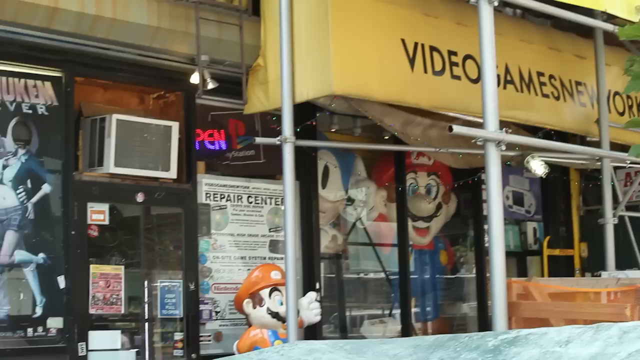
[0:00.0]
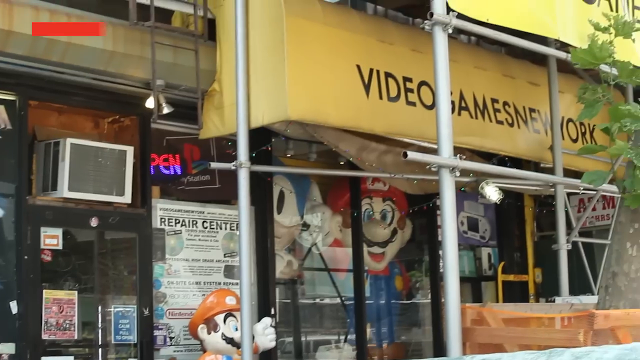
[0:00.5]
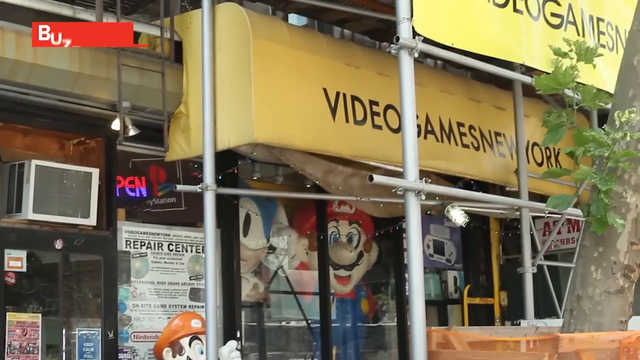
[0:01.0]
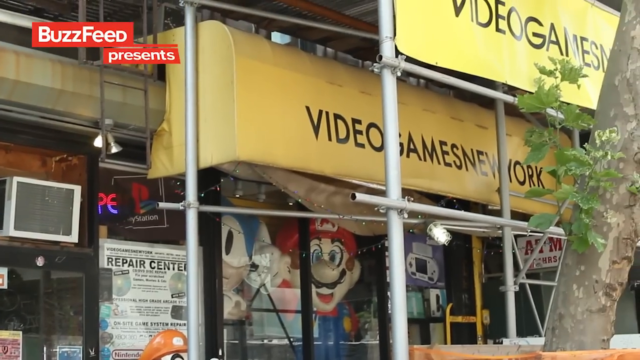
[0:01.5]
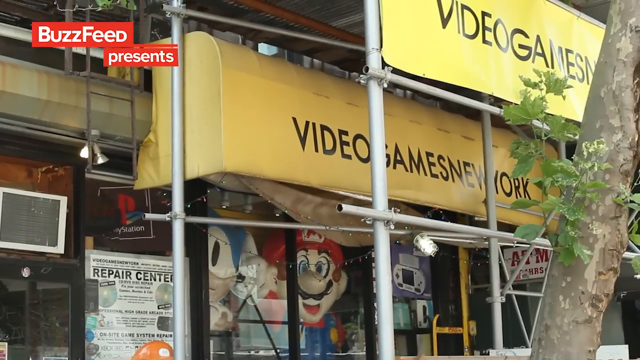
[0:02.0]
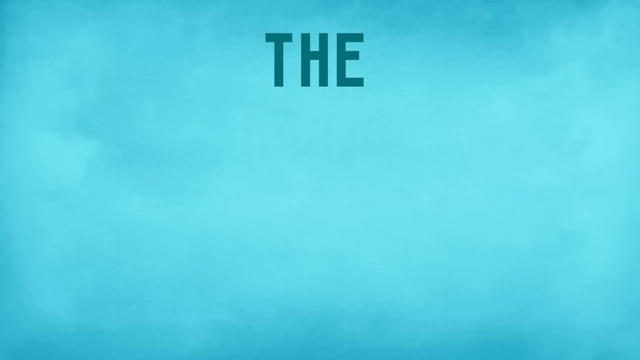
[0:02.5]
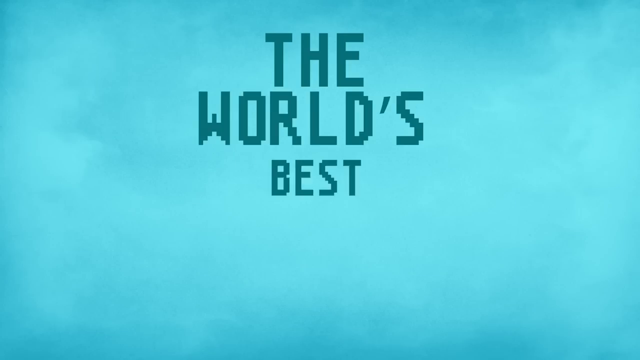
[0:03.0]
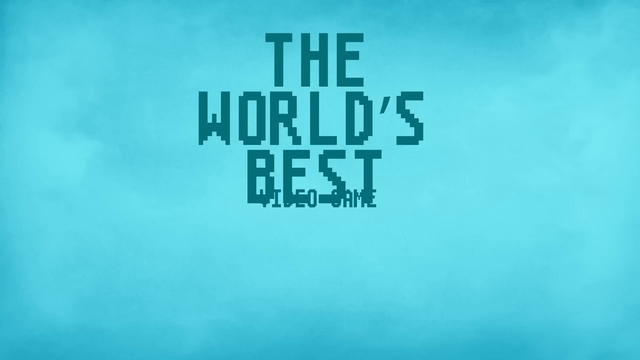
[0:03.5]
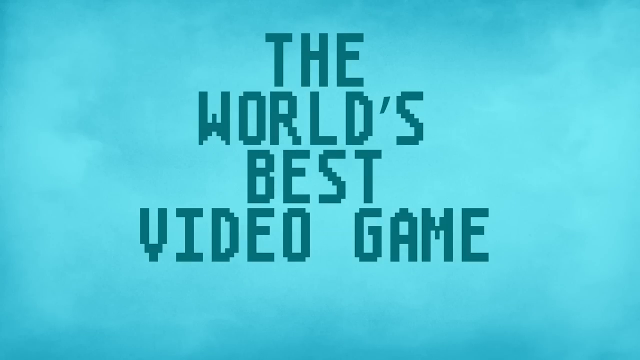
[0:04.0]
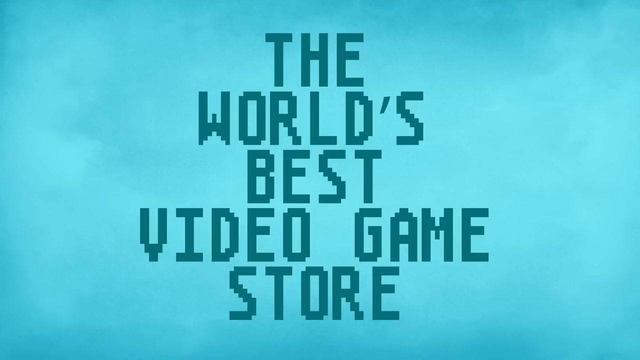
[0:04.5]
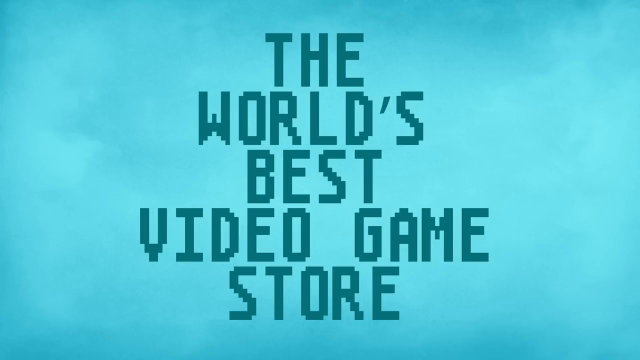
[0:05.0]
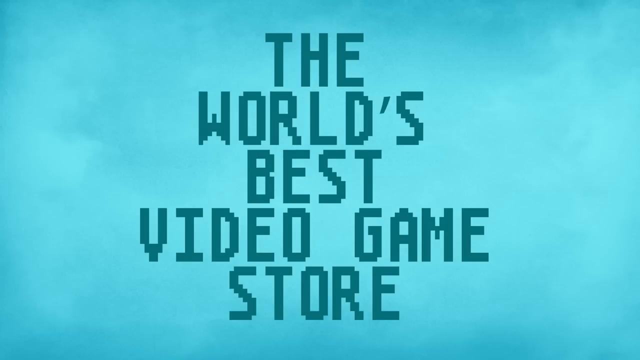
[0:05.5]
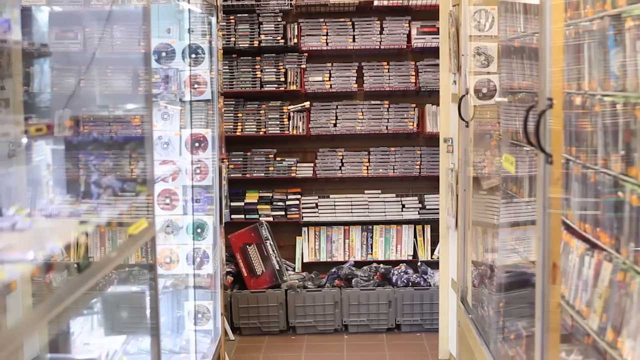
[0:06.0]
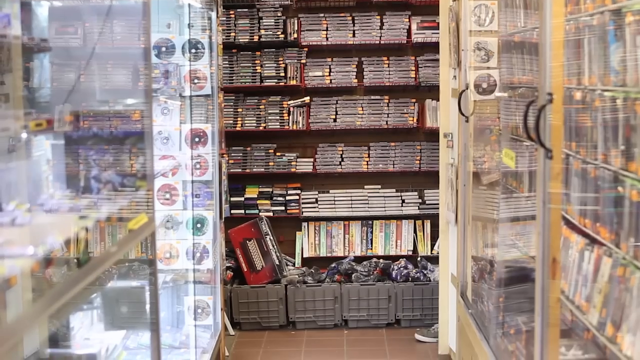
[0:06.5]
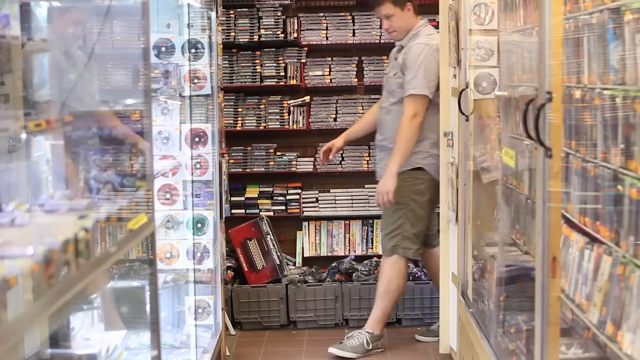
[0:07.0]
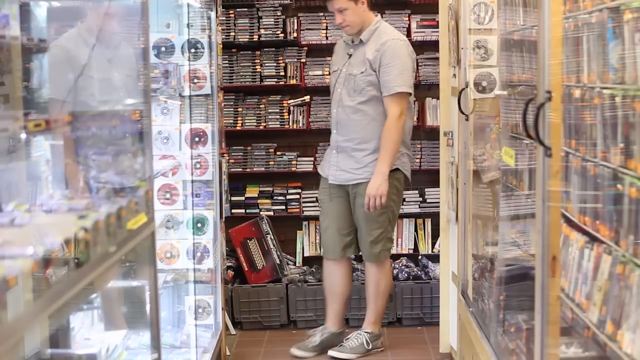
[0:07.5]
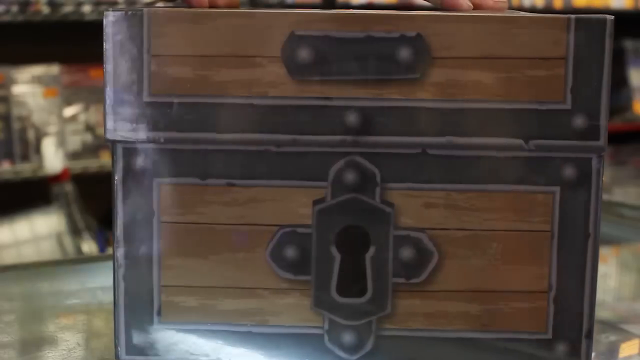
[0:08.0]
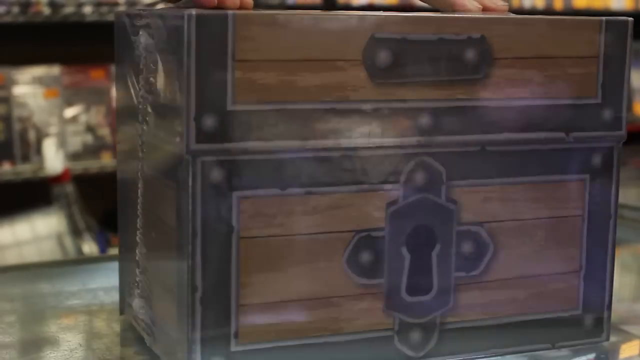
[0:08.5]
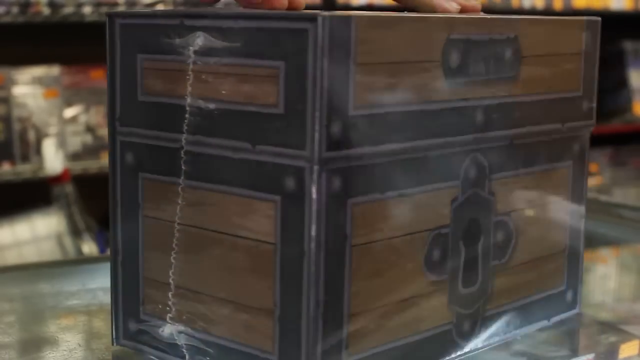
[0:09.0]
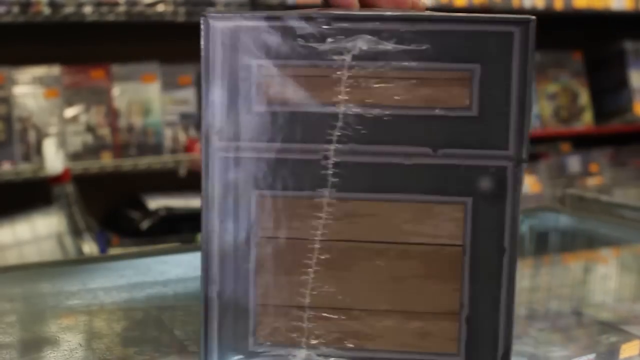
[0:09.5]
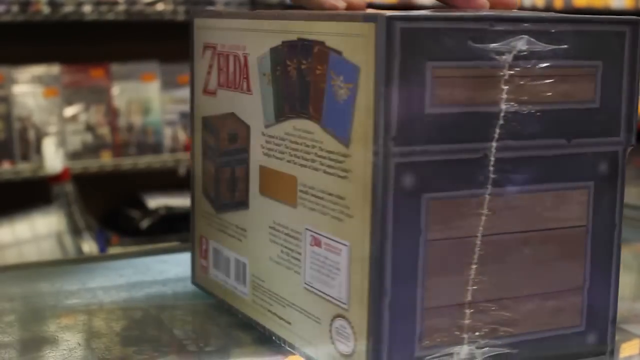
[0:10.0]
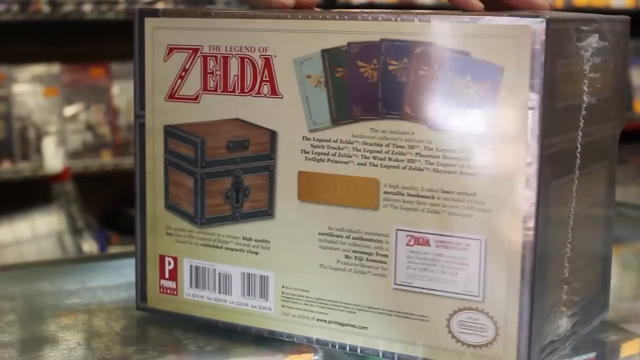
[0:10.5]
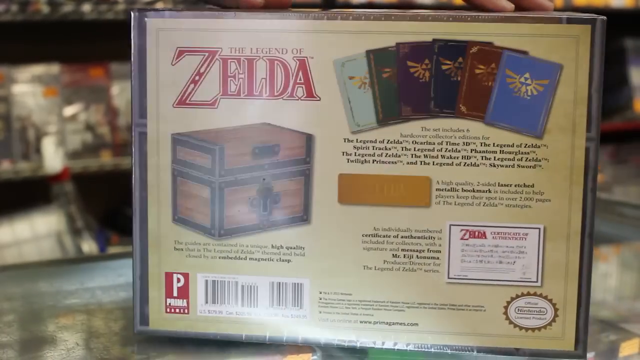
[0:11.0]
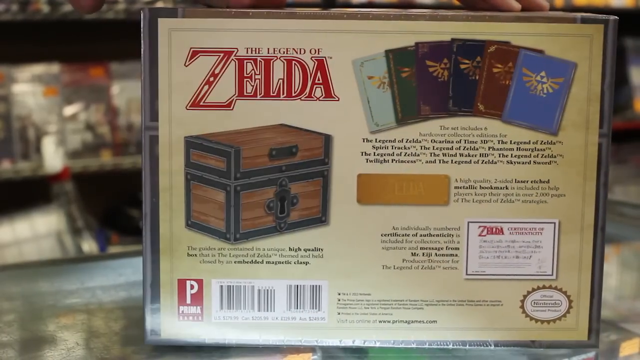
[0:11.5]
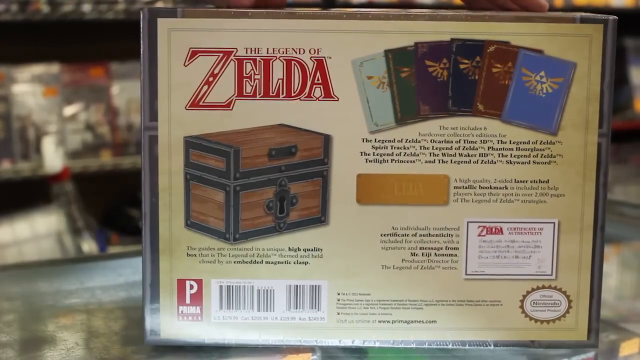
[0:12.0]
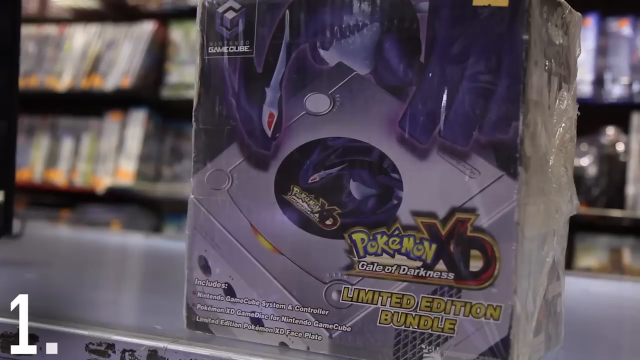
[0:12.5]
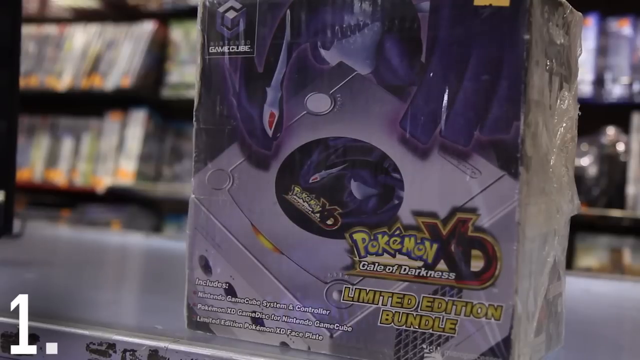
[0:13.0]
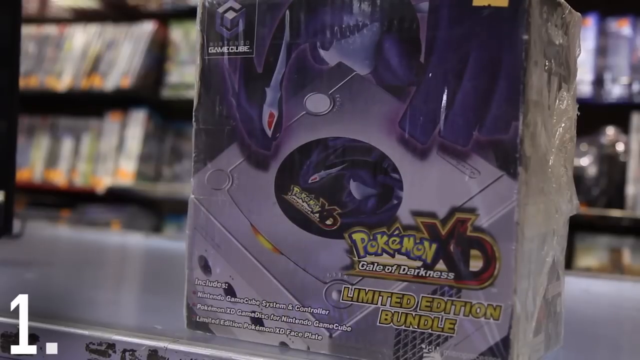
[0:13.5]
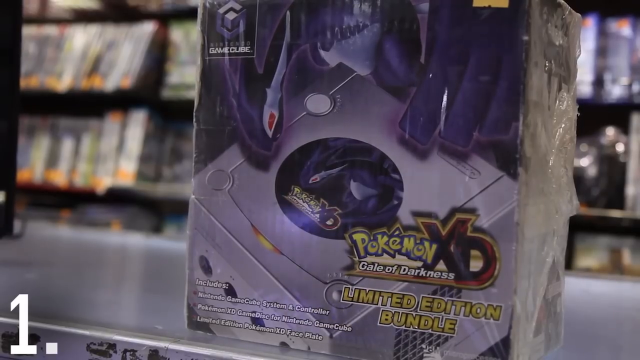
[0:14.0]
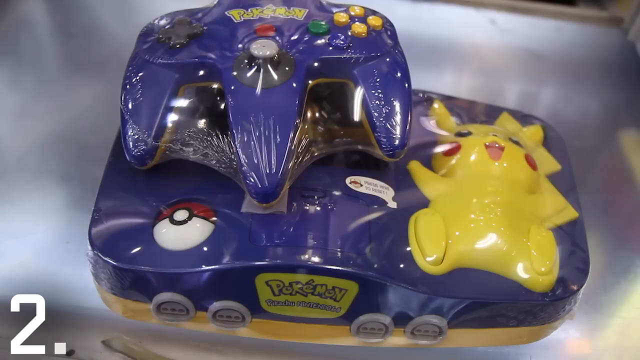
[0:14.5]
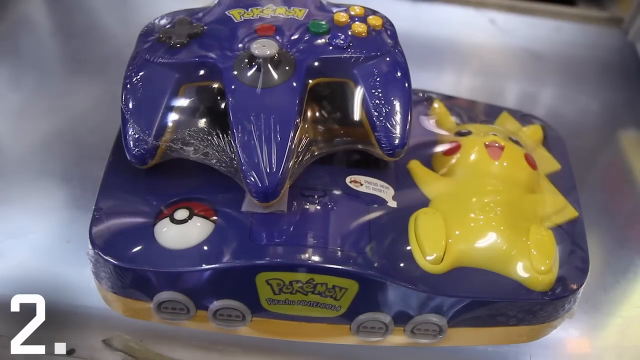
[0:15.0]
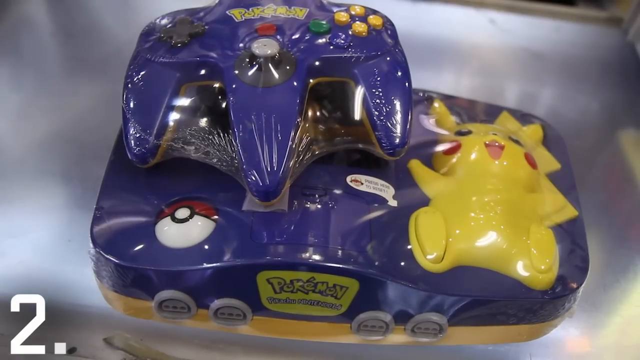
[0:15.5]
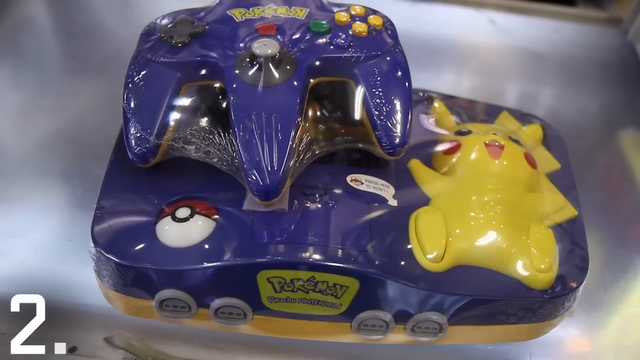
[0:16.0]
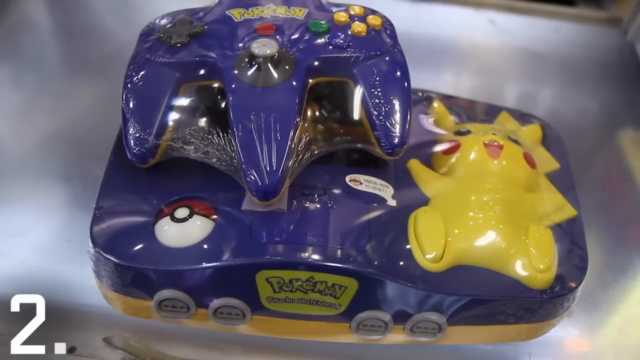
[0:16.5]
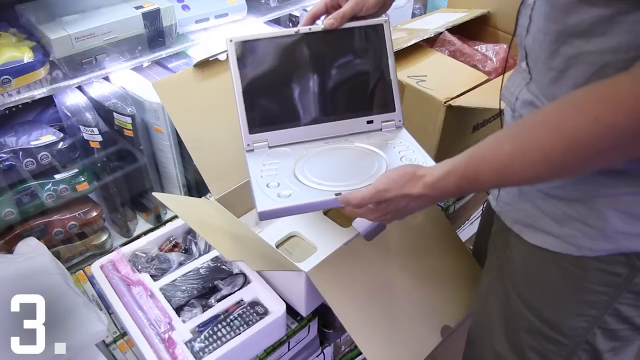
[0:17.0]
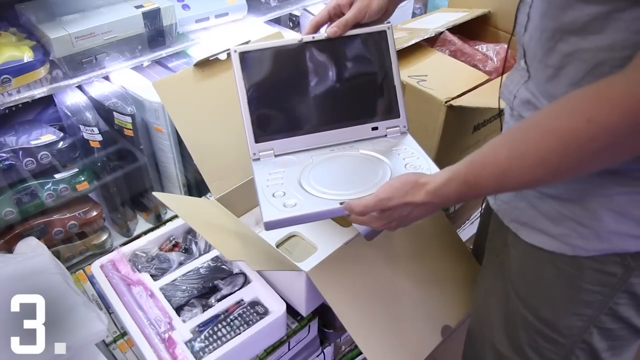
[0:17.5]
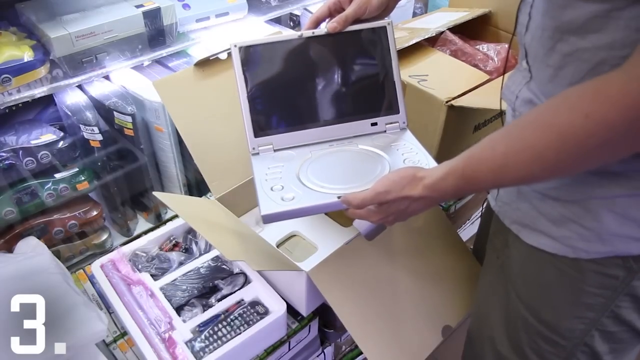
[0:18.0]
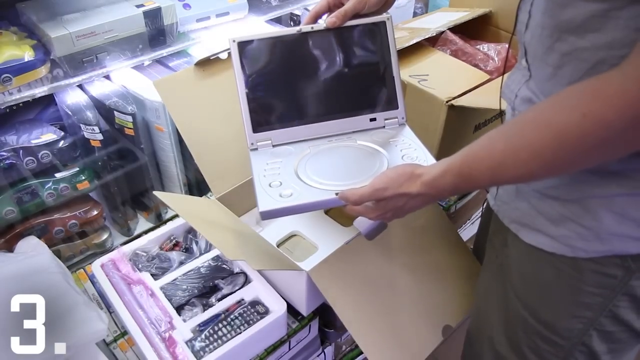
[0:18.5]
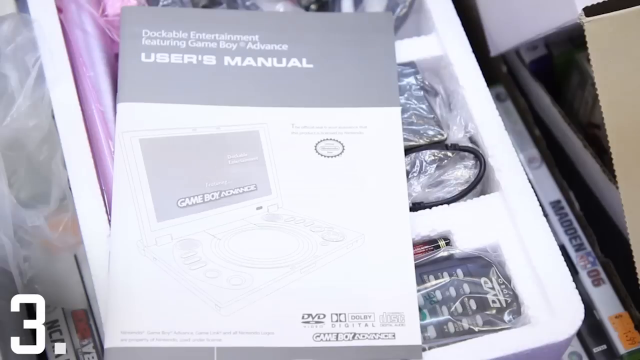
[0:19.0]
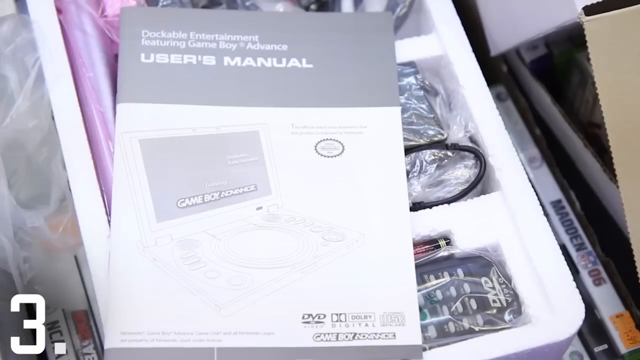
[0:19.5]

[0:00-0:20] A video game store is shown. In the window there is a Mario display, something like a big giant Mario doll or mannequin, and there is also a Sonic the Hedgehog mannequin in the window. Outside there is another Mario-looking statue that looks like it is made of plastic. The banner above the door reads "Video Games New York." The video moves to another screen, teal blue with dark green letters, that reads "the world's best video game store." A young man in khaki shorts and a khaki button-up shirt walks through the store. A bunch of different consoles in the store are shown, and the boy, who is Caucasian, holds some kind of laptop-looking or console-looking device.